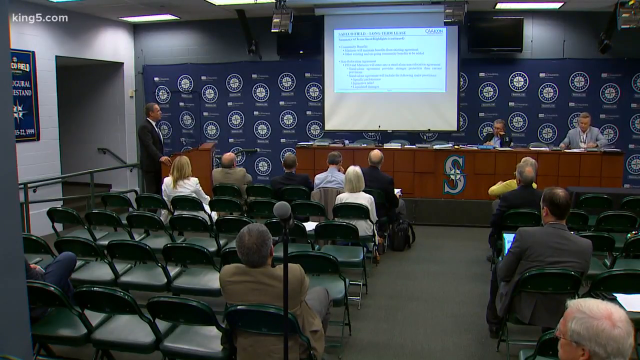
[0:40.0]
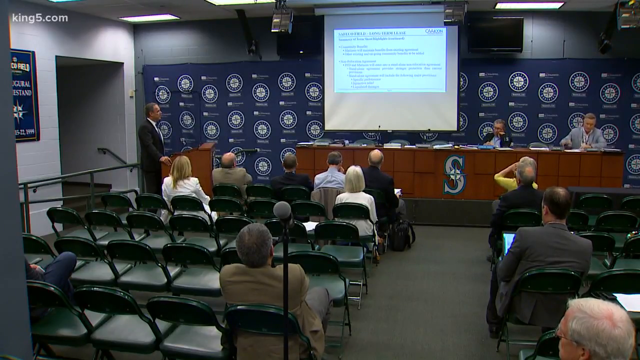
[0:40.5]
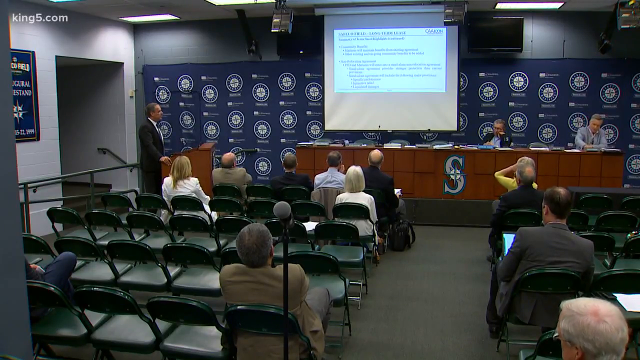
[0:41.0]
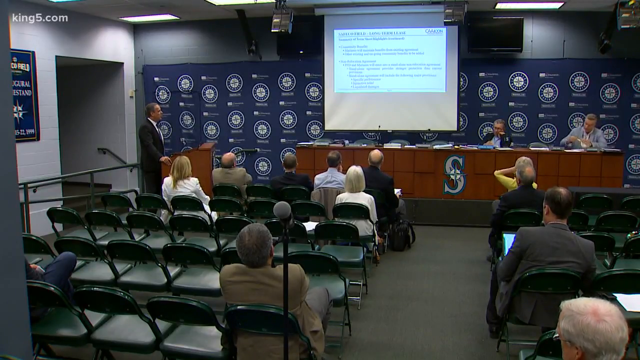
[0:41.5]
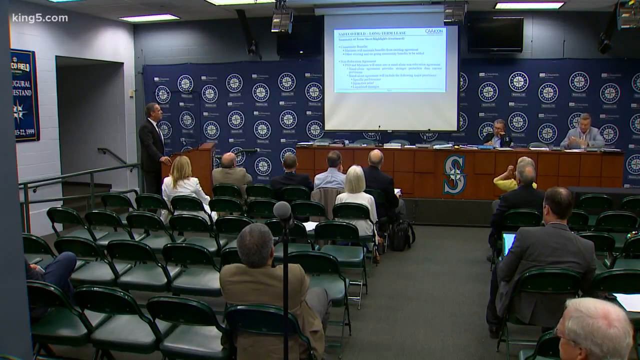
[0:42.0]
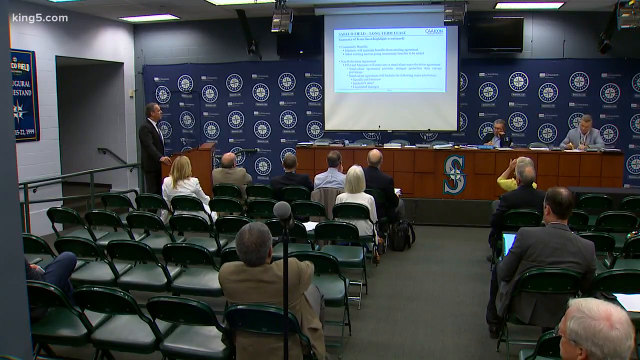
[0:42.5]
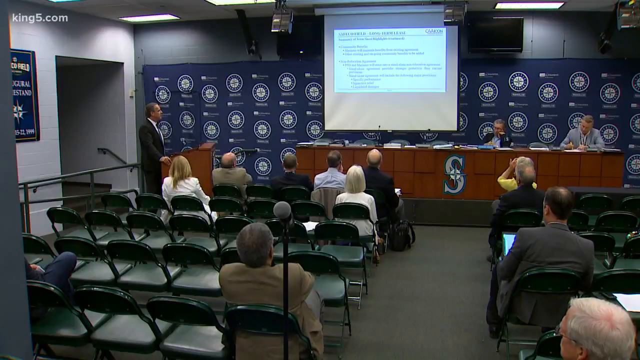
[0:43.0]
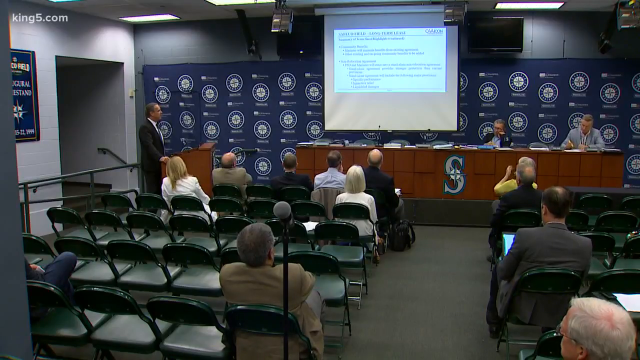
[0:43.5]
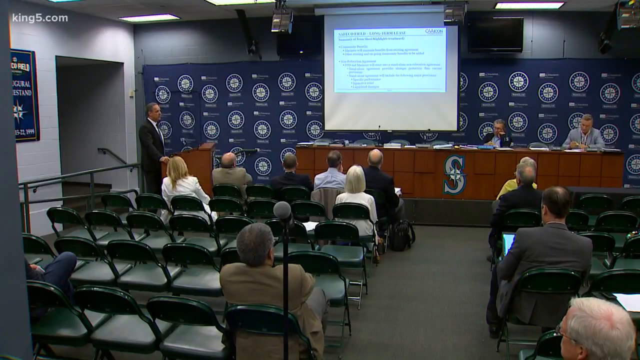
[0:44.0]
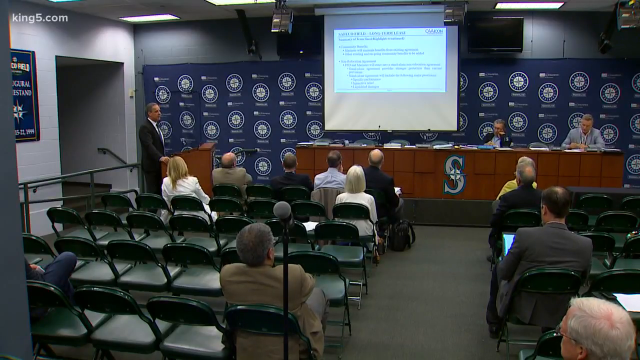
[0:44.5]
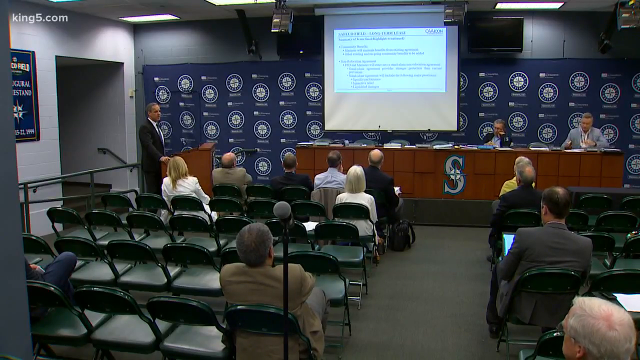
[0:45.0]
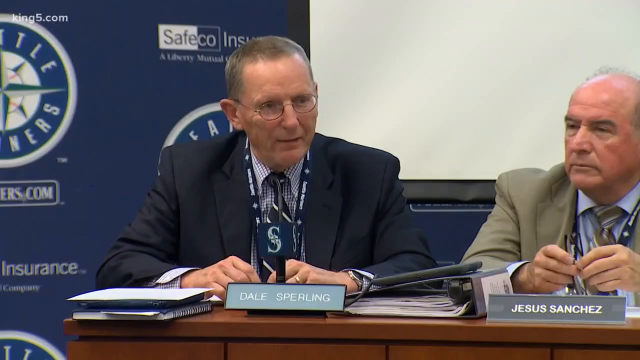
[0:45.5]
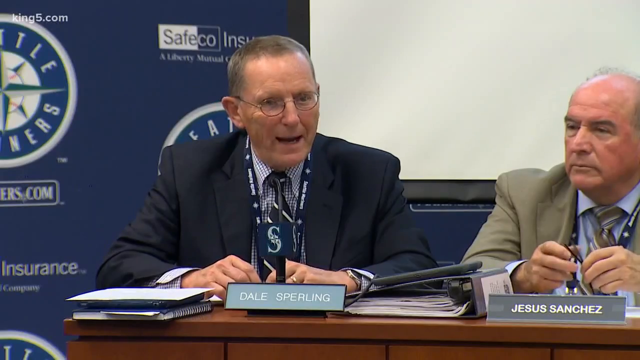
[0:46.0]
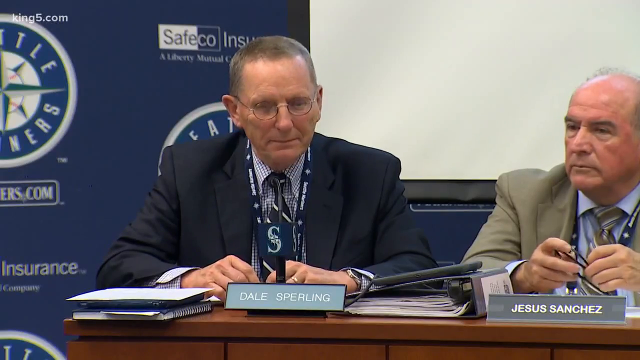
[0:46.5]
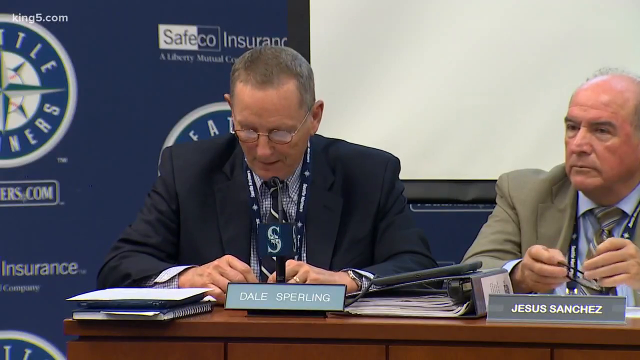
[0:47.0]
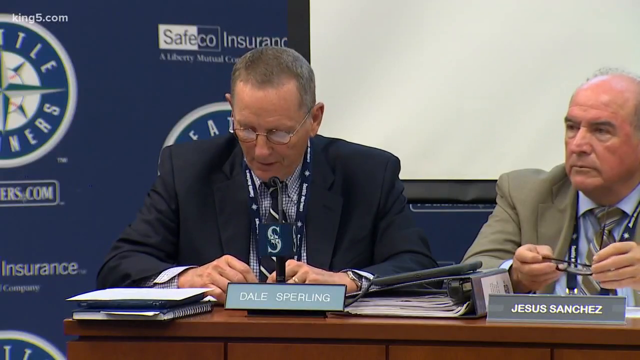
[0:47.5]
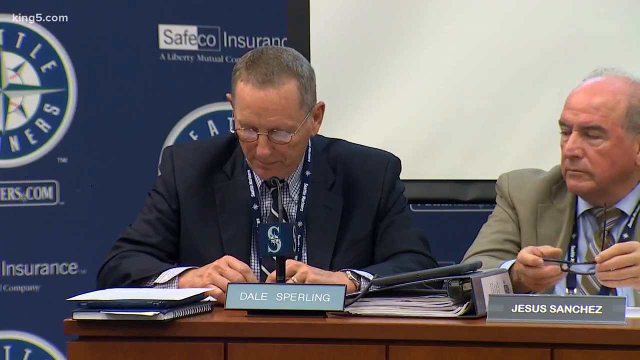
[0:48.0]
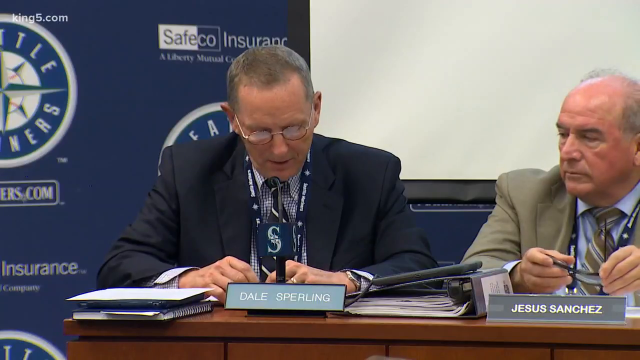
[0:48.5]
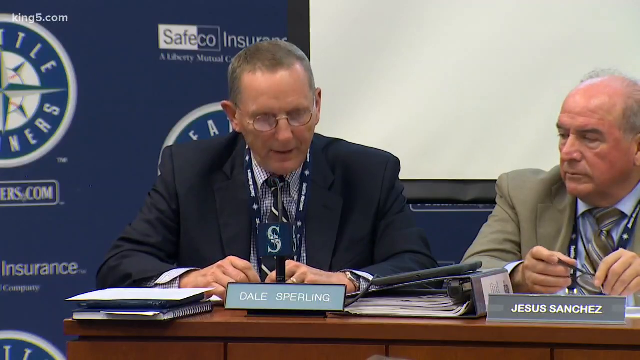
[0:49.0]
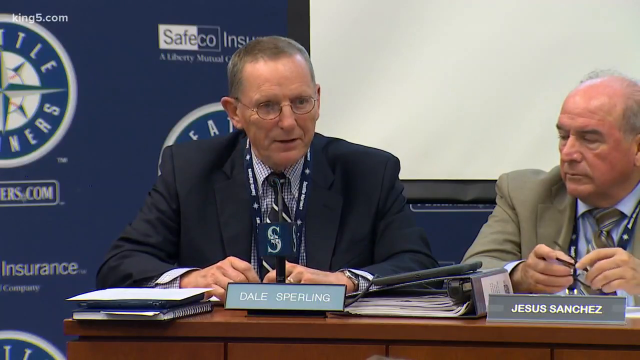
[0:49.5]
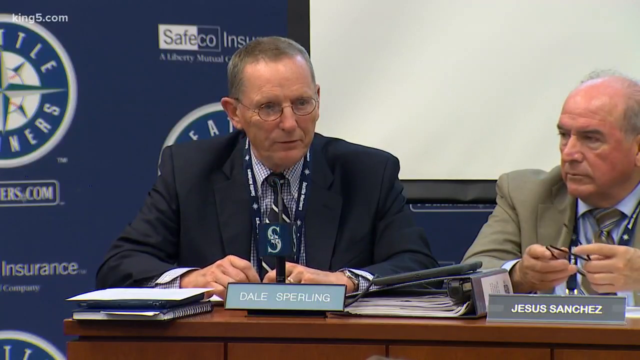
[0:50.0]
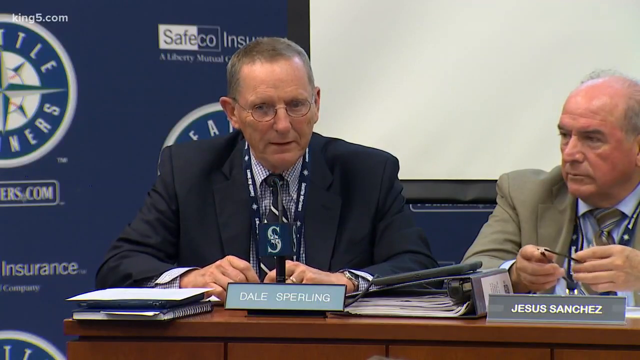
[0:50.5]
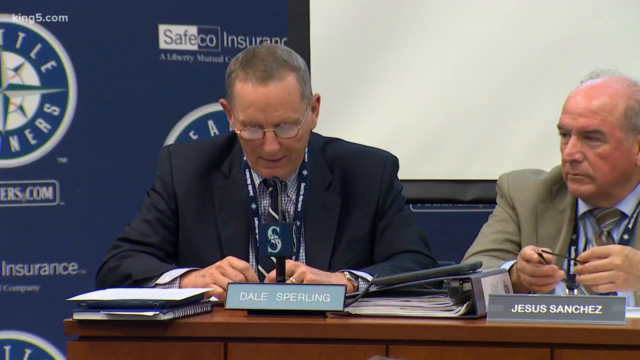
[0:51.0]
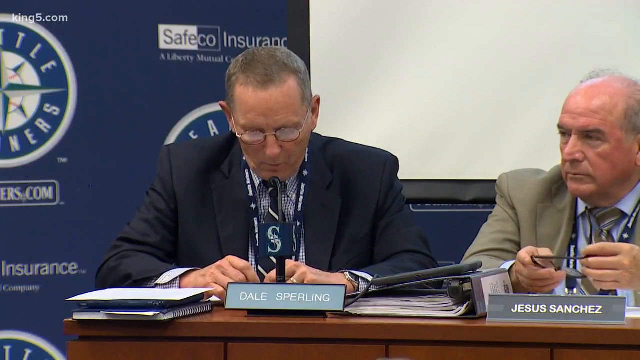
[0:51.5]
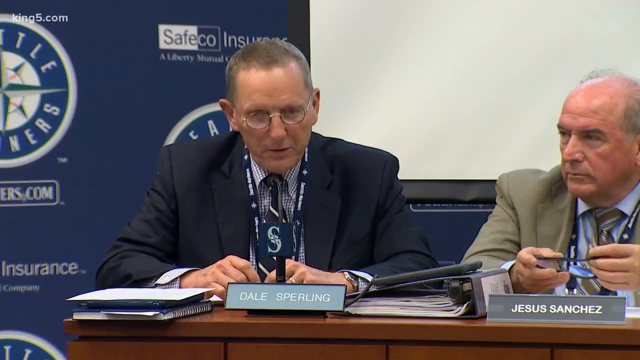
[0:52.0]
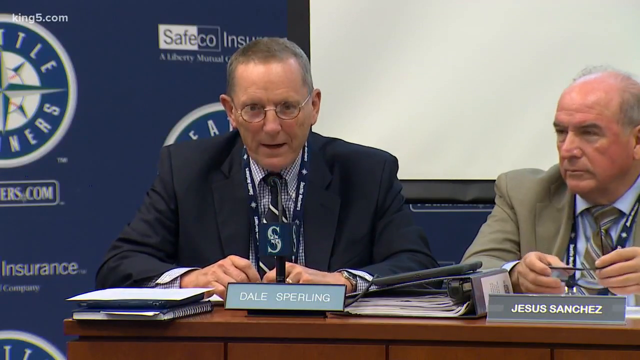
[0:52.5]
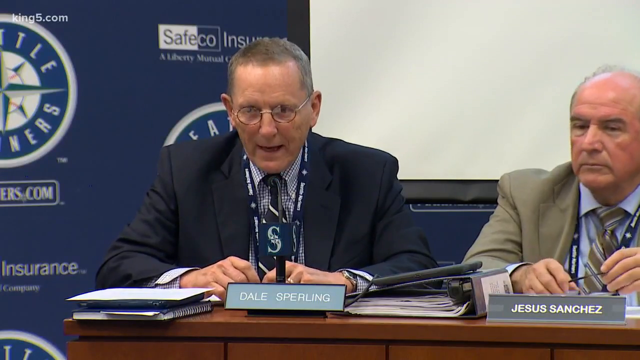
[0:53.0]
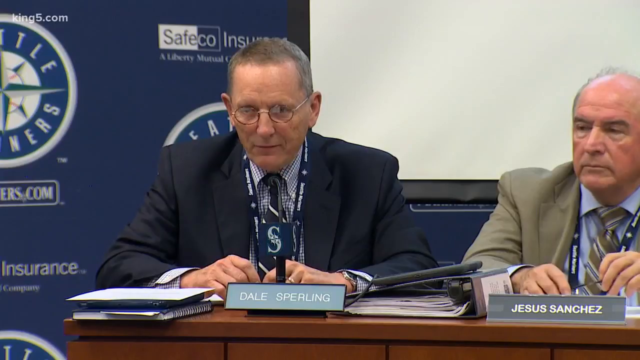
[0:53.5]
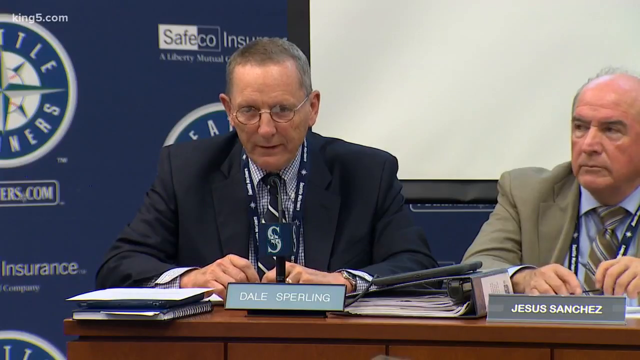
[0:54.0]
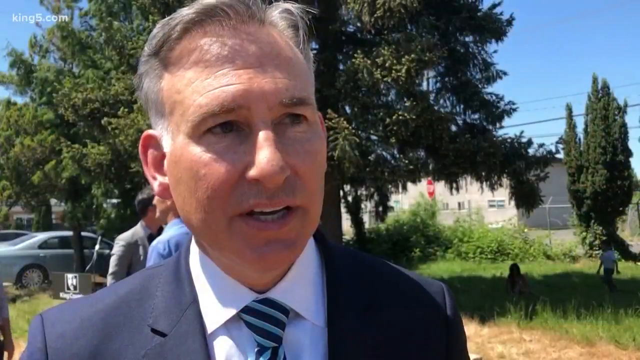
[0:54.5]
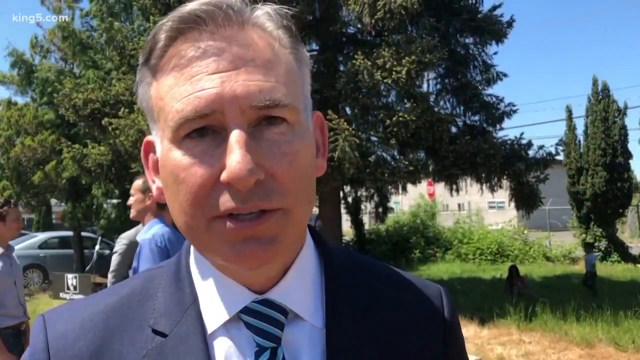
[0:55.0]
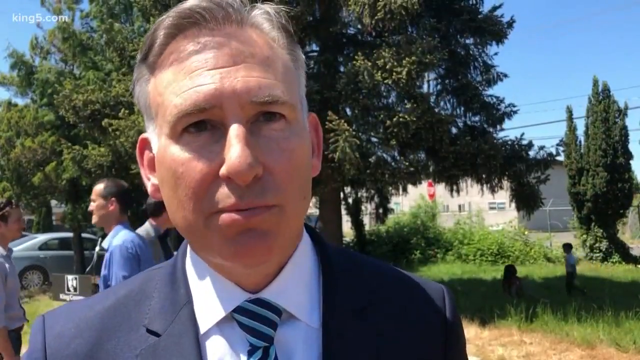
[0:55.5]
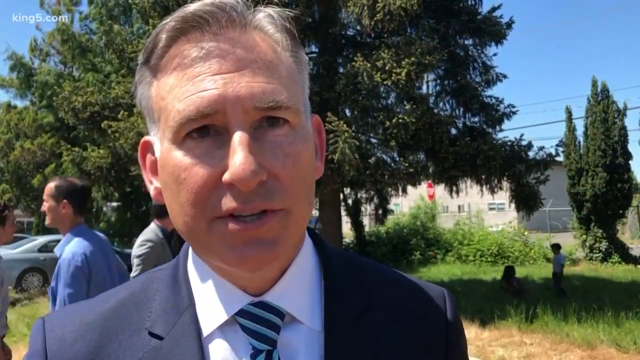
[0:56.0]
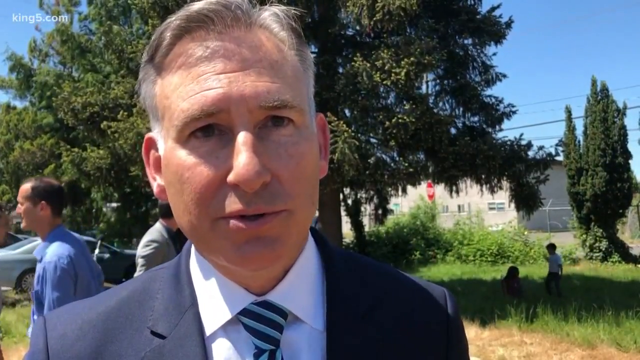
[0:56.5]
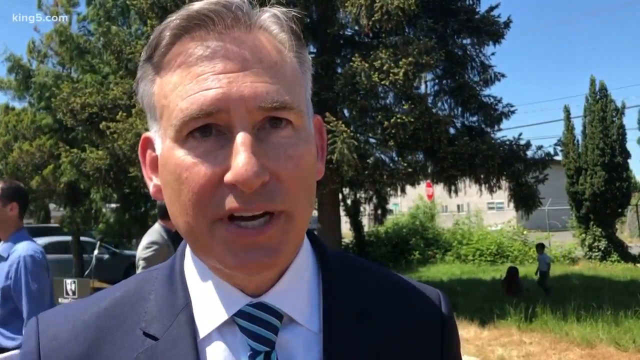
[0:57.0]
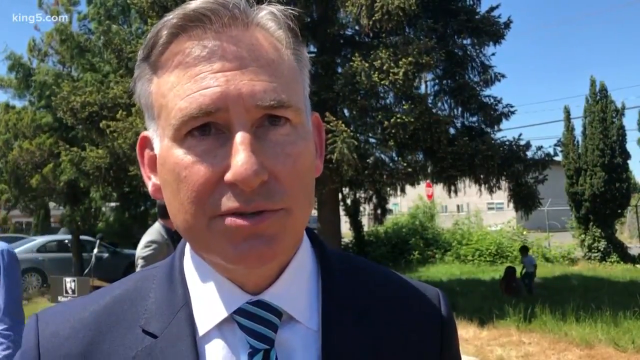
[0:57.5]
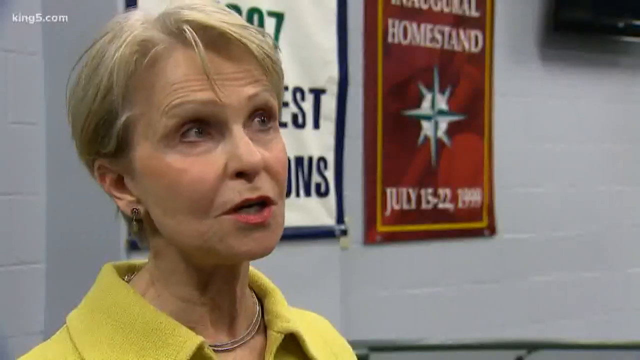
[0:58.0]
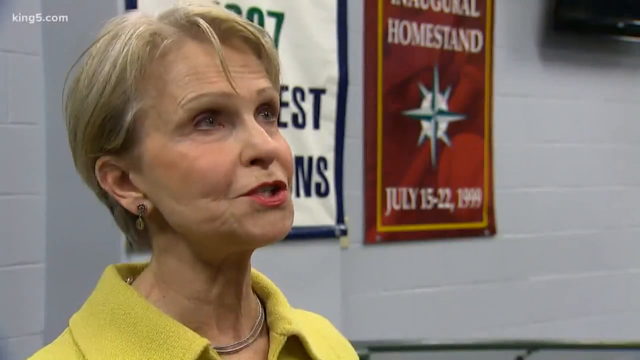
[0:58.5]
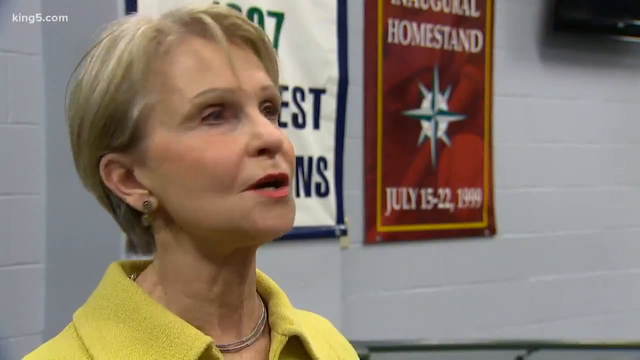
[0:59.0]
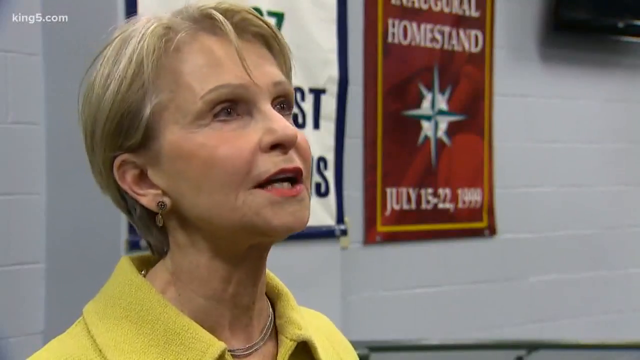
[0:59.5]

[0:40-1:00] A man appears to be standing up from the crowd and talking. It looks like many of the people who were at the desk have left, leaving only two. The man talking seems to be behind a podium located by the green folding chairs, and the document is still displayed on the board. The camera zooms in to Dale Sperling, another man, probably in his 70s, who is talking and wears small circular glasses. The scene then moves outside, where a man, probably in his 60s, wearing a jacket, suit and tie, is being interviewed, with some people walking around behind him. There is a grassy area where two kids are playing. The video then goes back inside to a painted white brick wall, where Virginia is being spoken to.